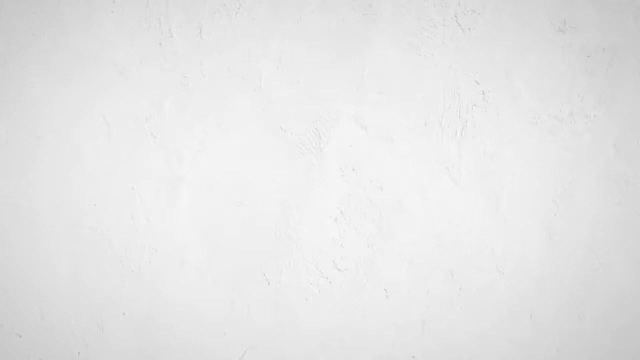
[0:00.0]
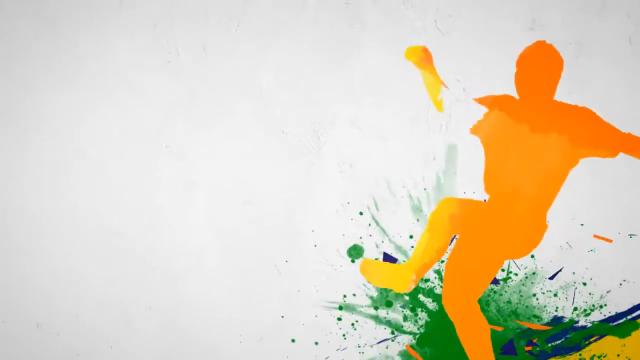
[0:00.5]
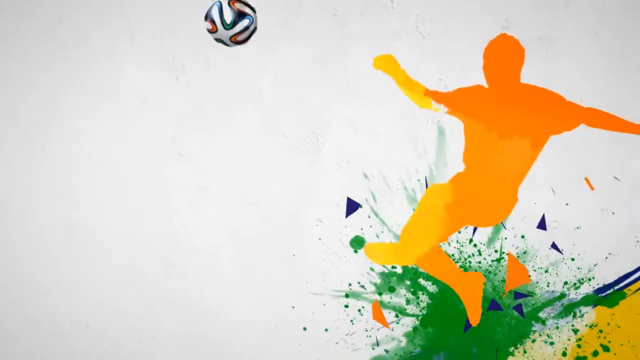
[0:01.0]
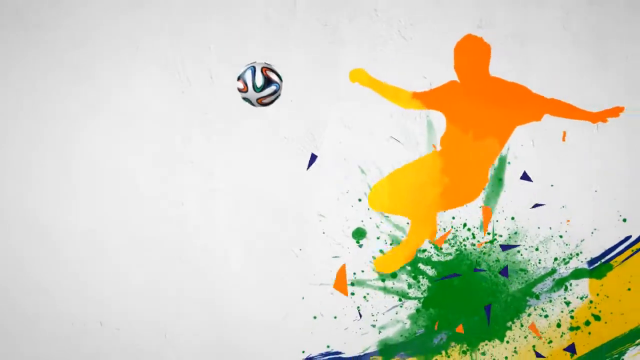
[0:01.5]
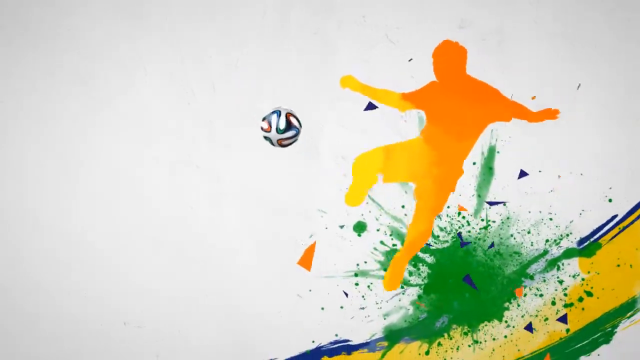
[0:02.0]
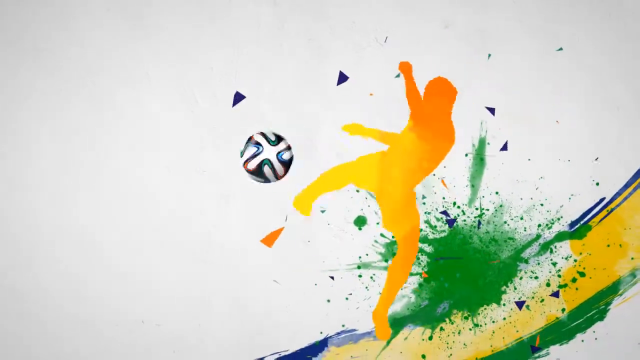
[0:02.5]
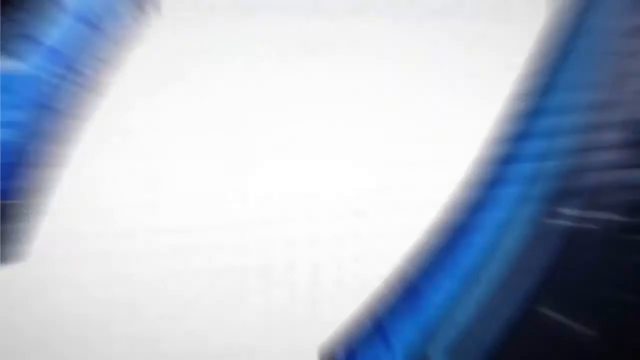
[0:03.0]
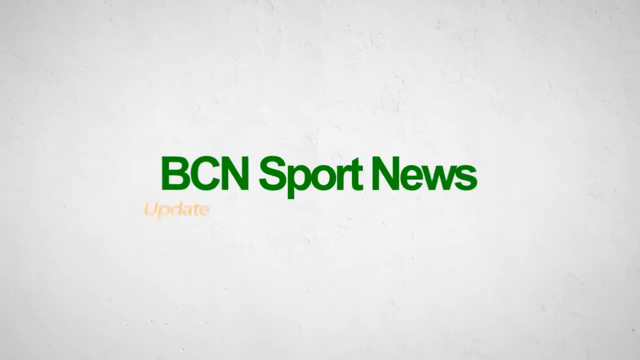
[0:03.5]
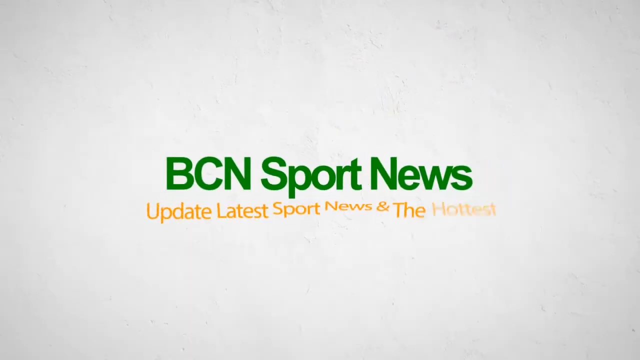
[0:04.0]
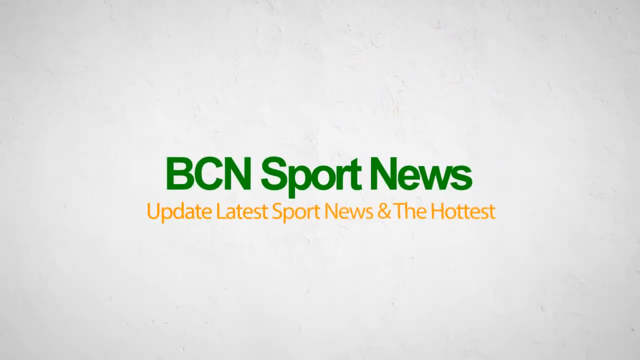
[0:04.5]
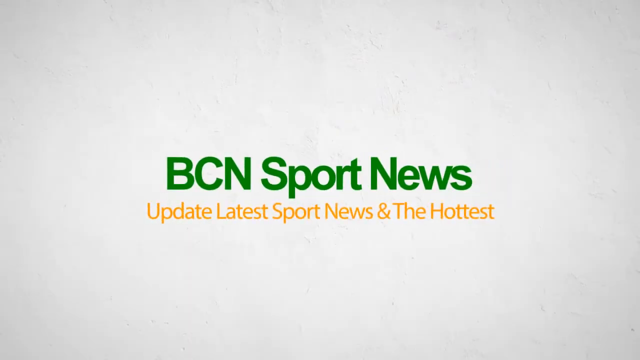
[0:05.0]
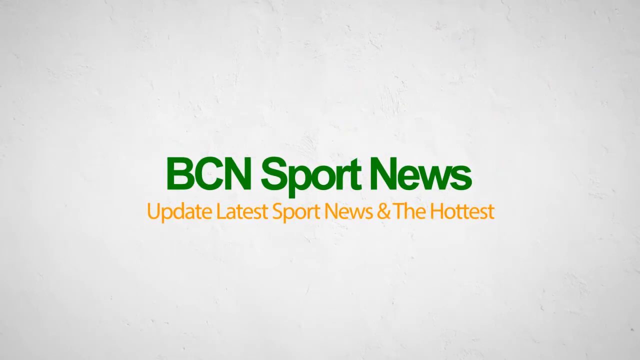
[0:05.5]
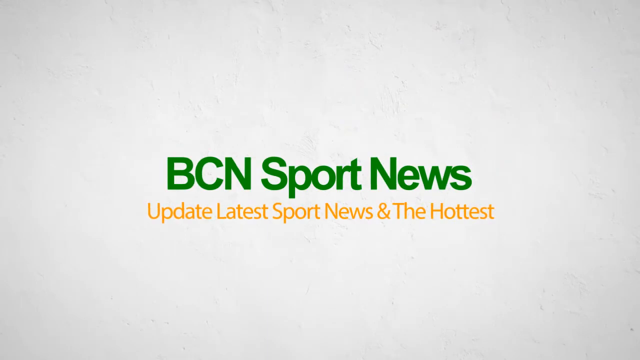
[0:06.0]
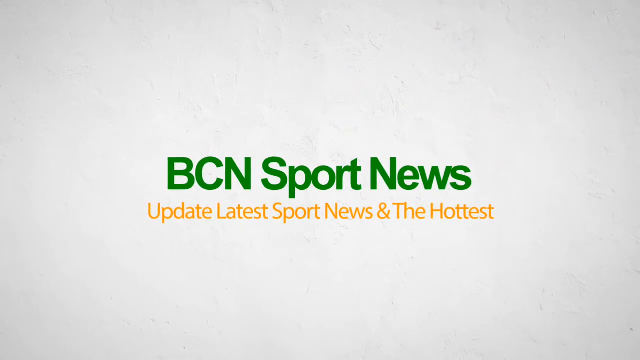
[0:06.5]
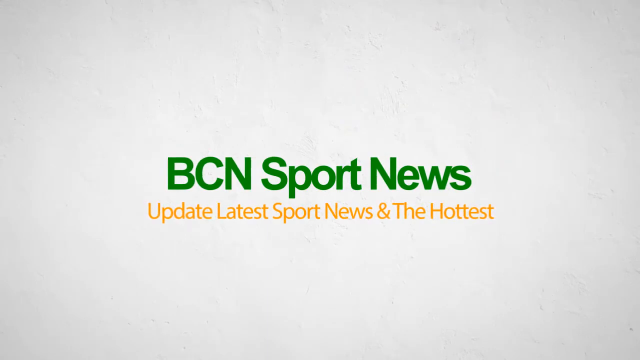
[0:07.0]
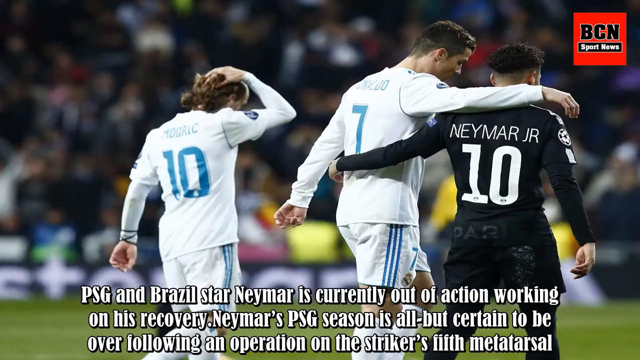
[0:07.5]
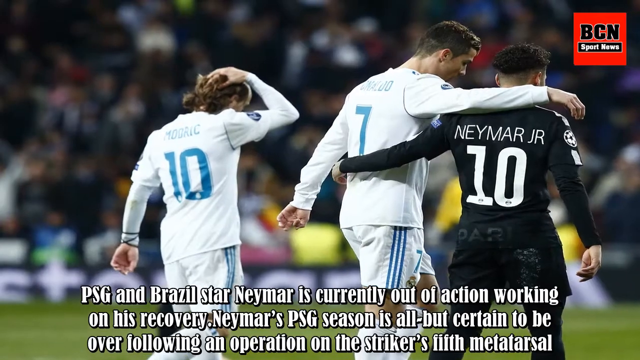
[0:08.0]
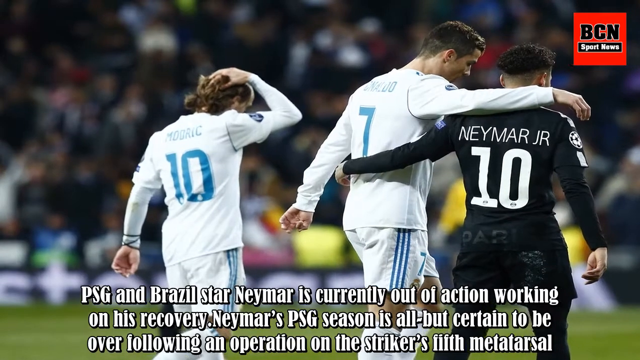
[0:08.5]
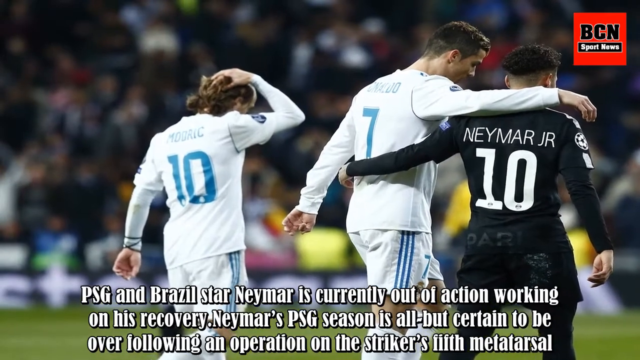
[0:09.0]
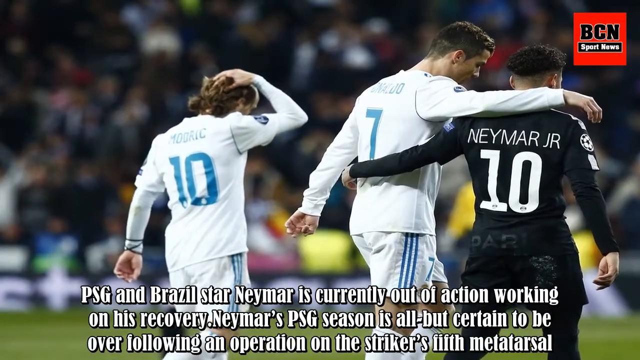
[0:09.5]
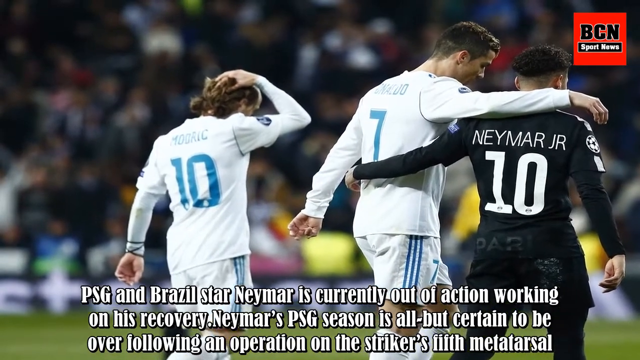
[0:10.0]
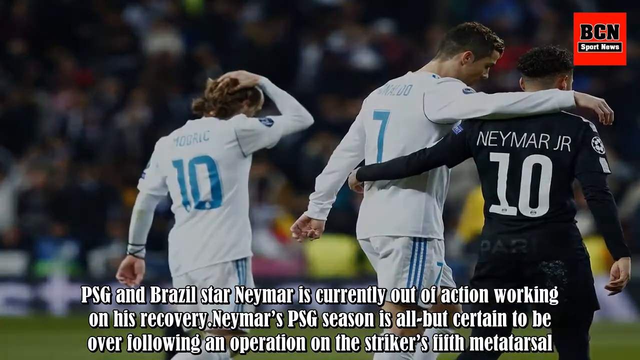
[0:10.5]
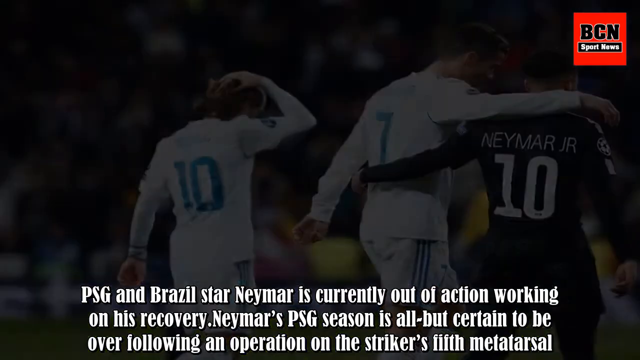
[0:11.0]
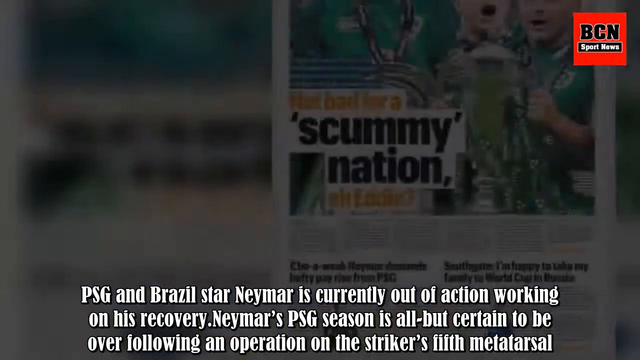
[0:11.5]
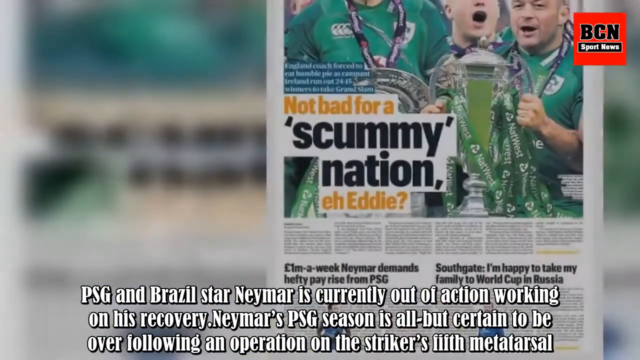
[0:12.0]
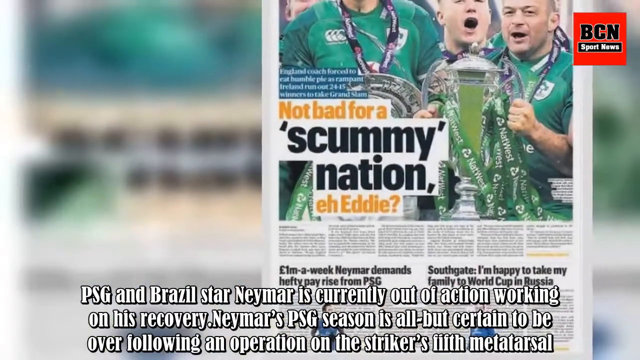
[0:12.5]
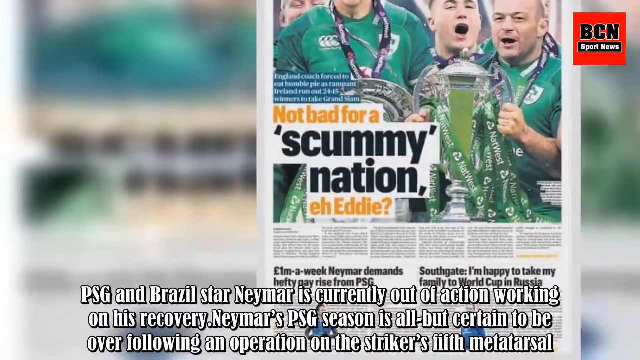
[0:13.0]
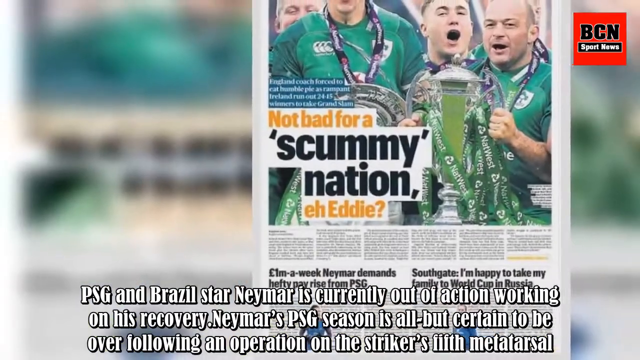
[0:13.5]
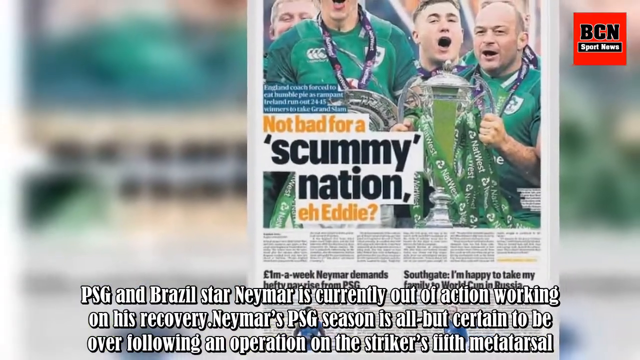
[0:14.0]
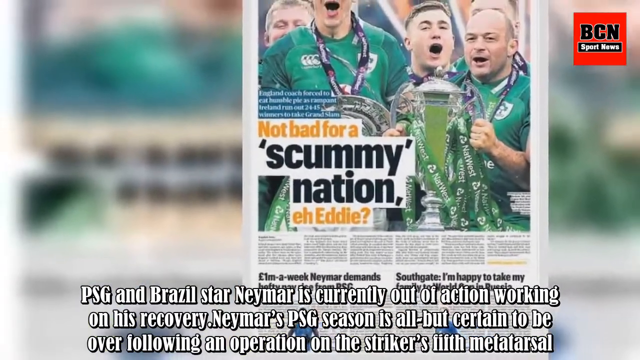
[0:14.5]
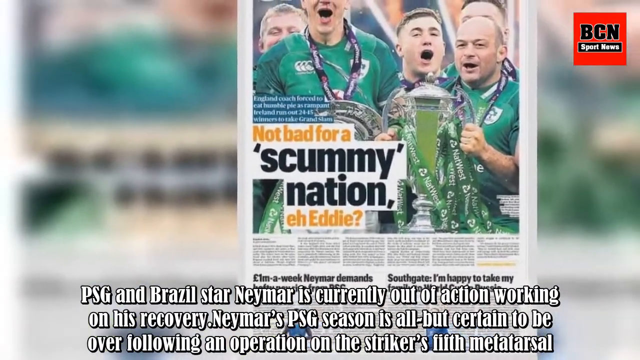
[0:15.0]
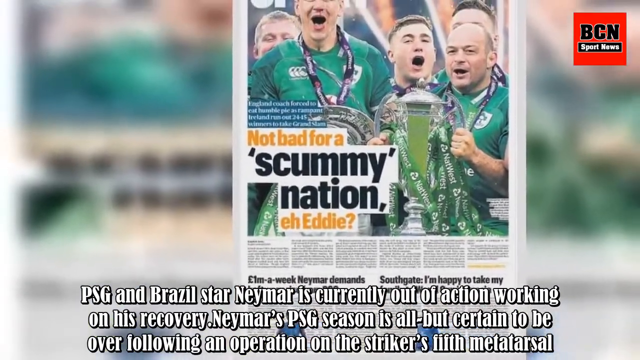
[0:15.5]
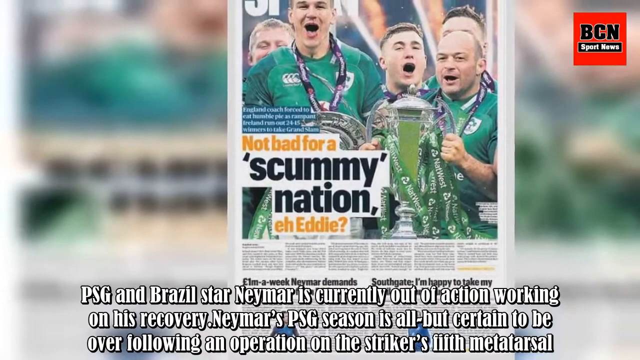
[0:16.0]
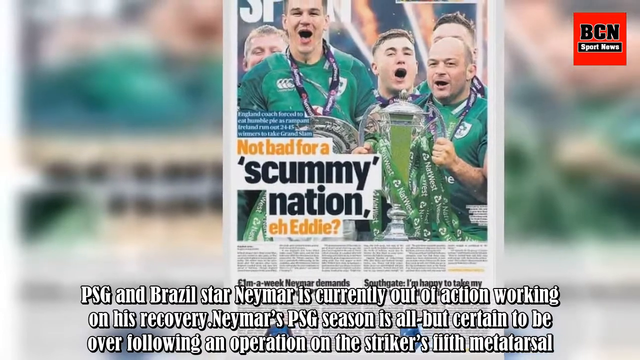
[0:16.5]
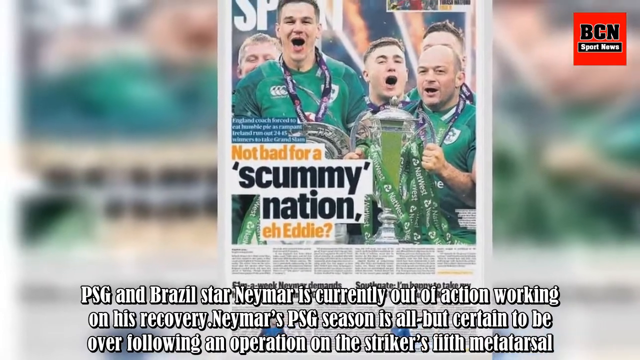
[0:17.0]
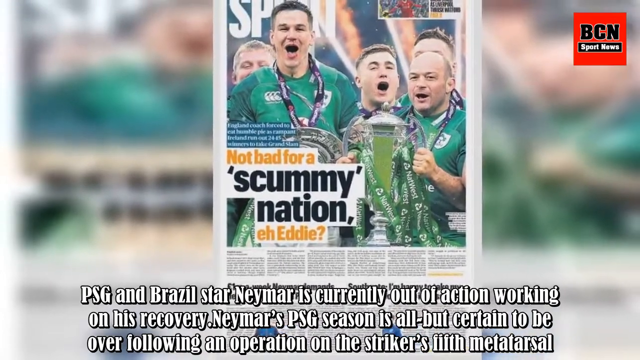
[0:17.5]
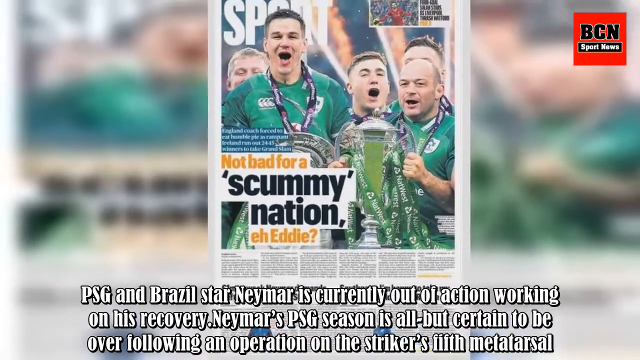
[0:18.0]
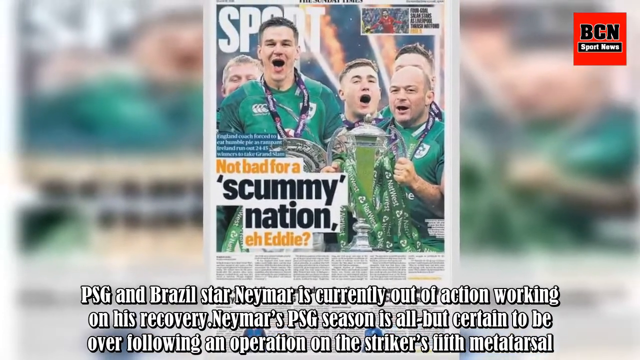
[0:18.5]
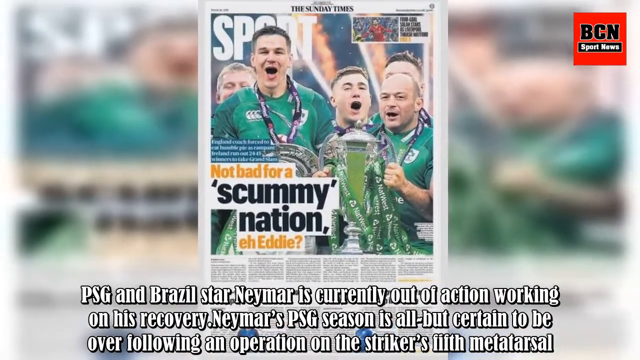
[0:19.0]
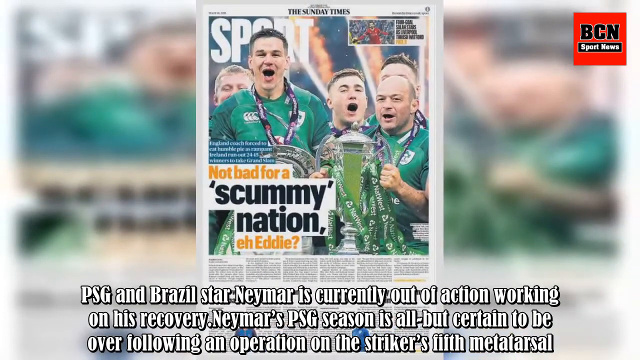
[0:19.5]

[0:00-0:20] The video opens on a white background with a graphic of a multi-colored silhouette of a man about to kick a soccer ball. The soccer ball is white, with multi-colored green, red and blue stripes all over it. The design also includes a green paint splash and many hexagonal and polygonal shapes, such as triangles, in orange, blue and a little yellow. The man is a gradient of yellow and orange. The elements flip out toward the middle of the screen and the graphic turns into a title card for BCN Sport News, with yellow text below it that says "update latest sport news and the hottest". Next comes a picture of three soccer players: two wear white and the one on the right wears black. The text names them "Neymar Jr.", "Morick" and "Ronaldo", with the numbers 10, 7 and 10.